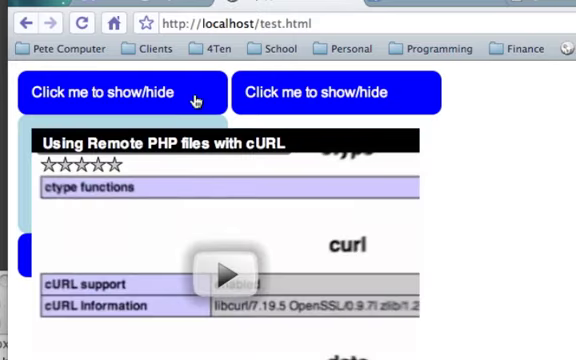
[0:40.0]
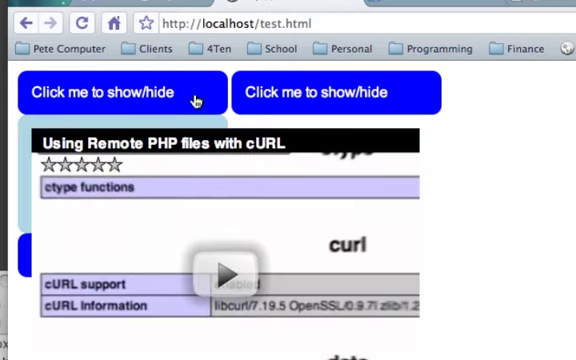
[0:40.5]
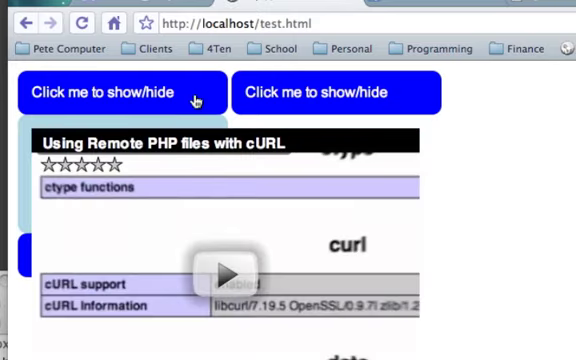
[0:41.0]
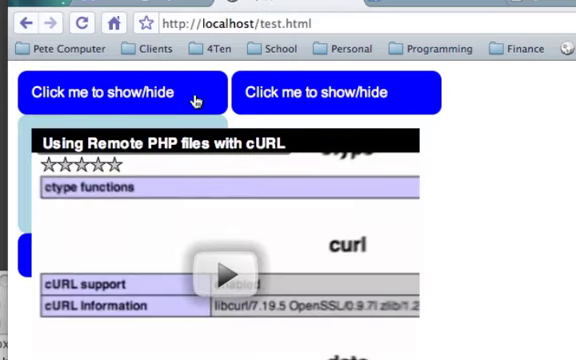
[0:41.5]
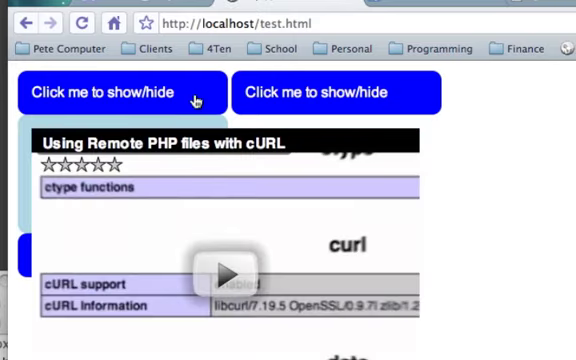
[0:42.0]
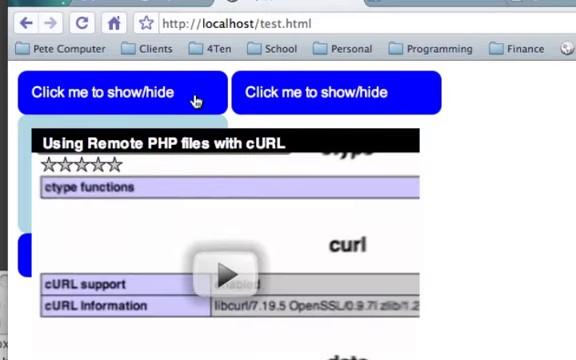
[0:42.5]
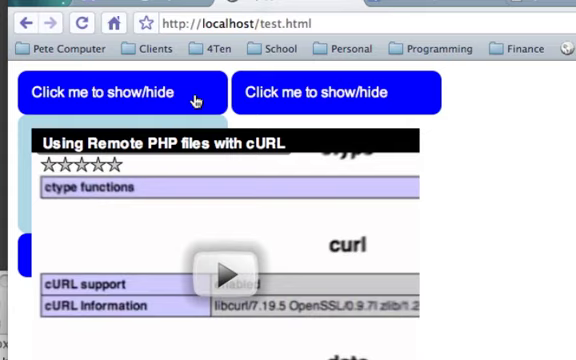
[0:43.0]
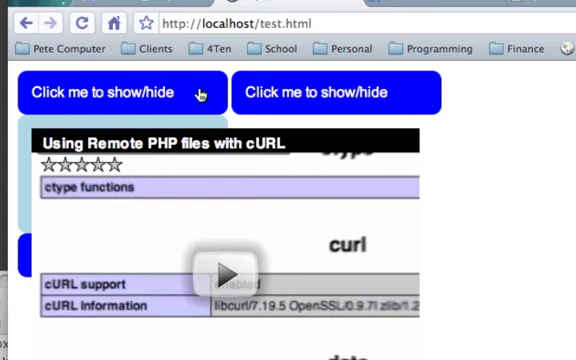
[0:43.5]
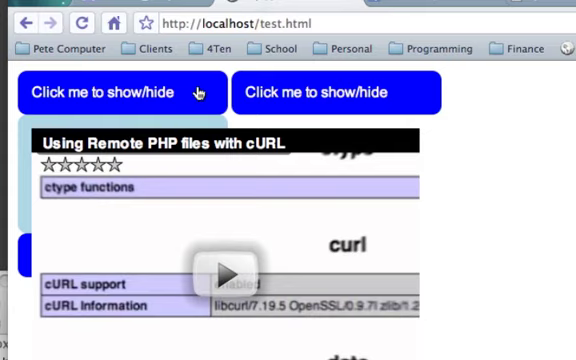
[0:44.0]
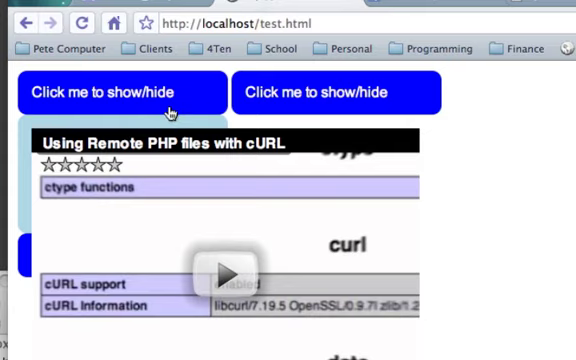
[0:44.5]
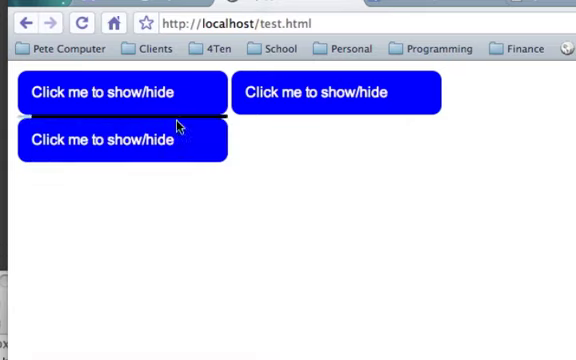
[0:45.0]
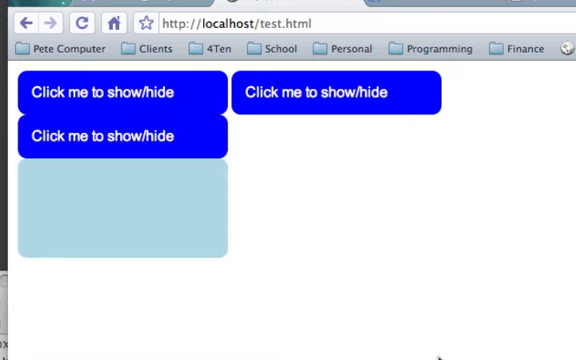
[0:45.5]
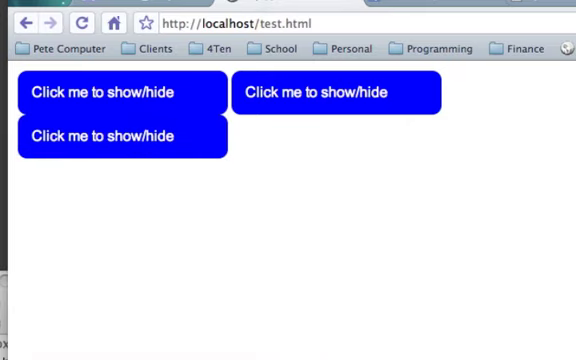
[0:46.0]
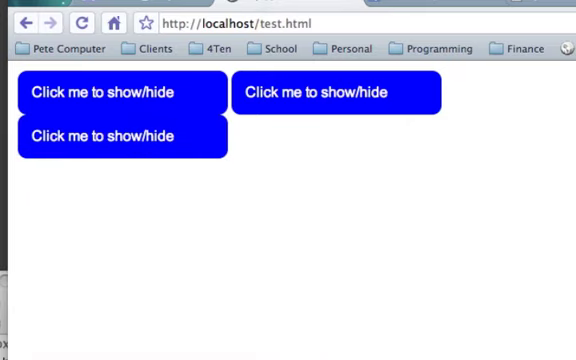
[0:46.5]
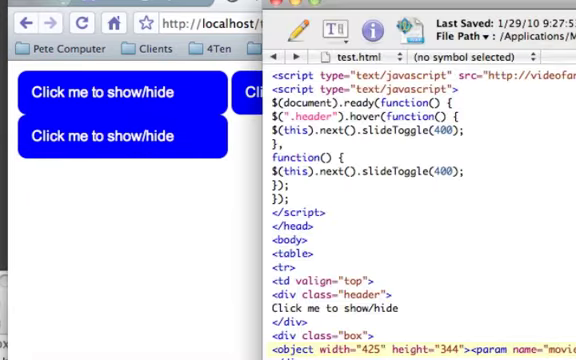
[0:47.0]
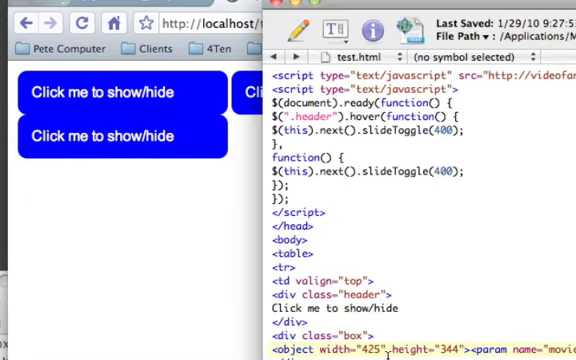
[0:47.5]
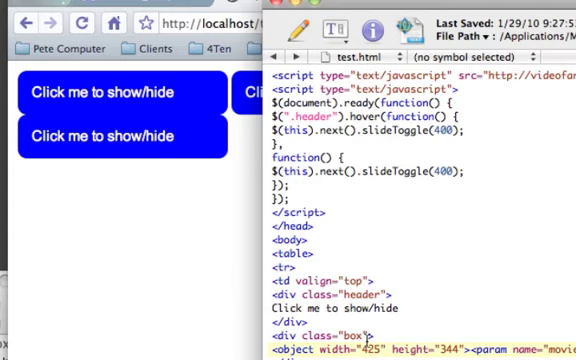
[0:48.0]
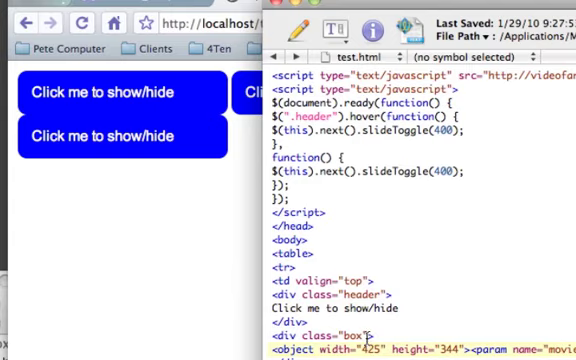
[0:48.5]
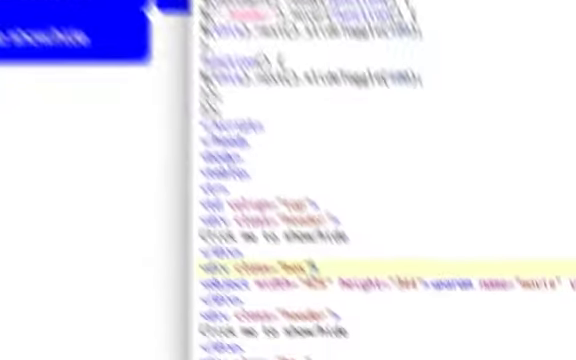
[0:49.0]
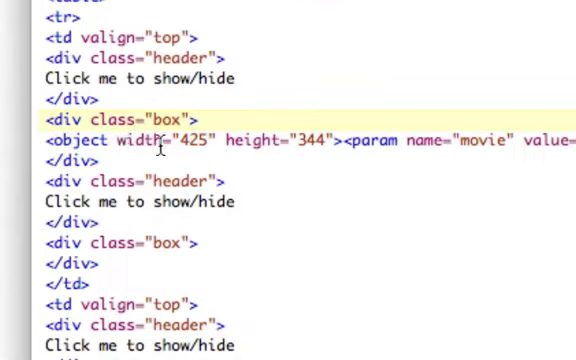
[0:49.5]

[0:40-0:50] Someone is recording their computer screen, with the view zoomed in on a test screen in the web browser on the "localhost/test.html" page. Three identical blue buttons reading "click me to show hide" are shown. The top left one is clicked on and expanded, showing an embedded YouTube video associated with that button. They click on it, which hides the YouTube video. They then open a program showing various lines of text, scroll down, and highlight the width on the line of text associated with embedding the YouTube video.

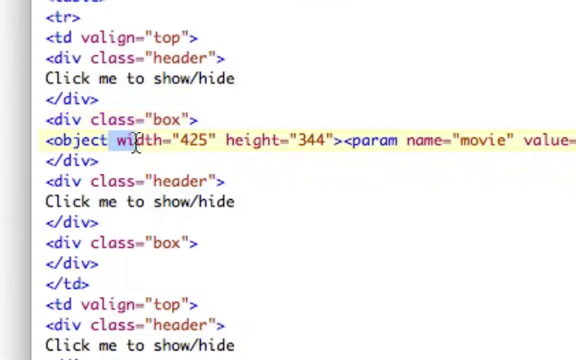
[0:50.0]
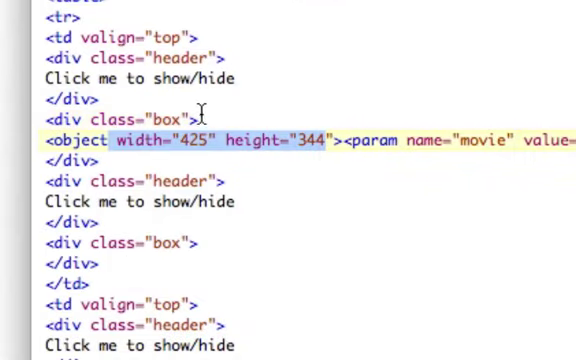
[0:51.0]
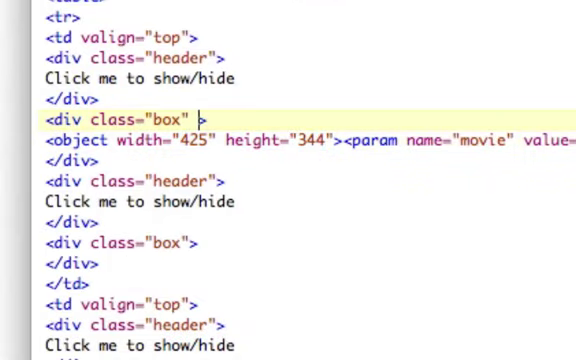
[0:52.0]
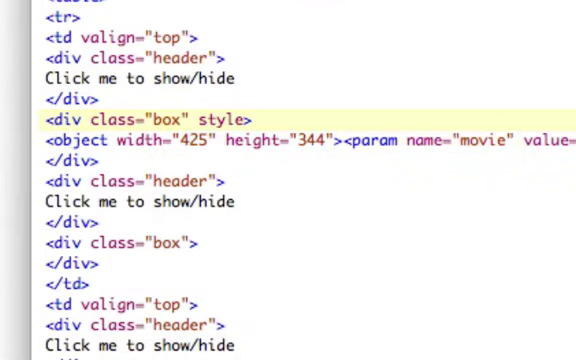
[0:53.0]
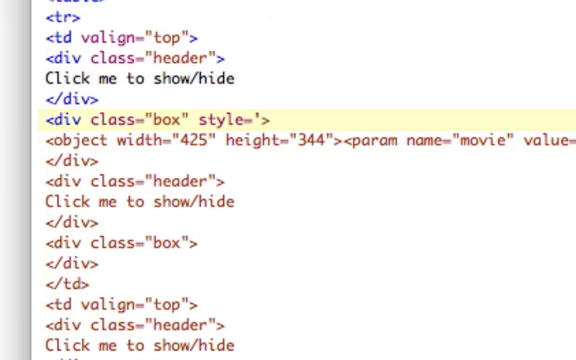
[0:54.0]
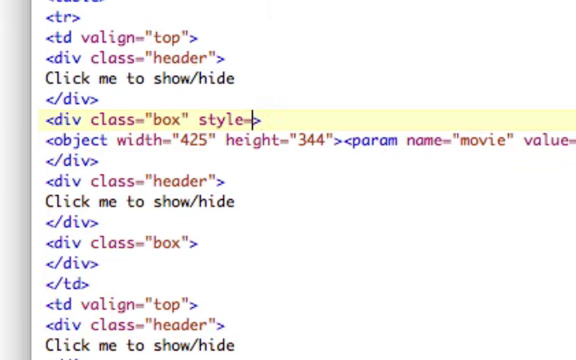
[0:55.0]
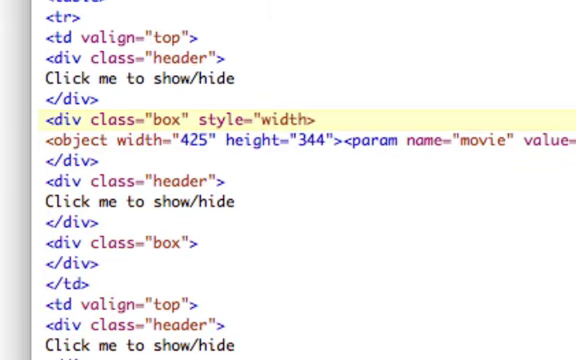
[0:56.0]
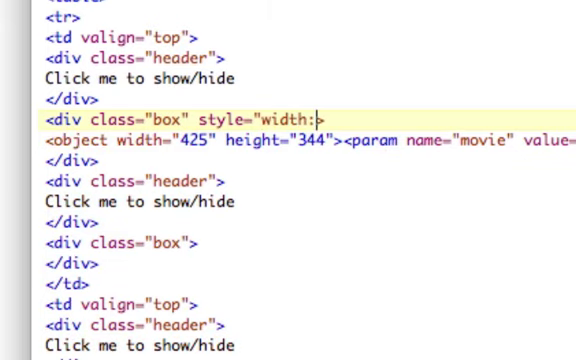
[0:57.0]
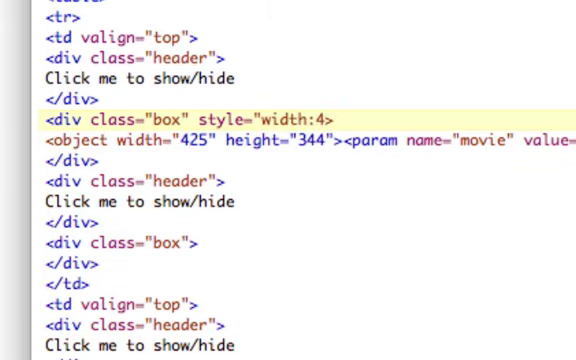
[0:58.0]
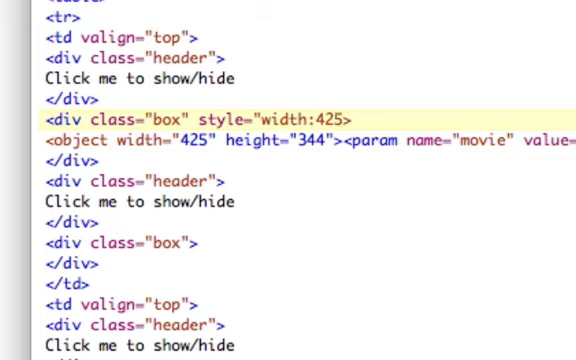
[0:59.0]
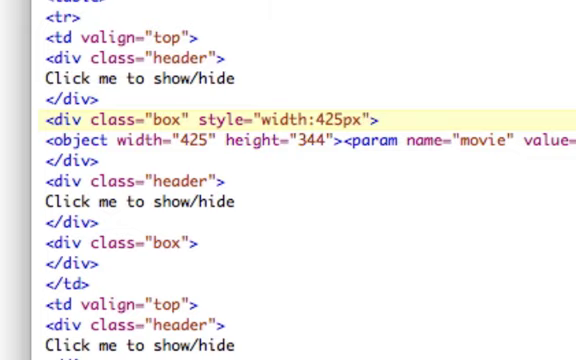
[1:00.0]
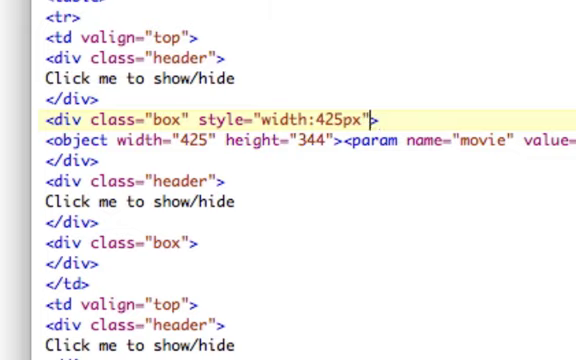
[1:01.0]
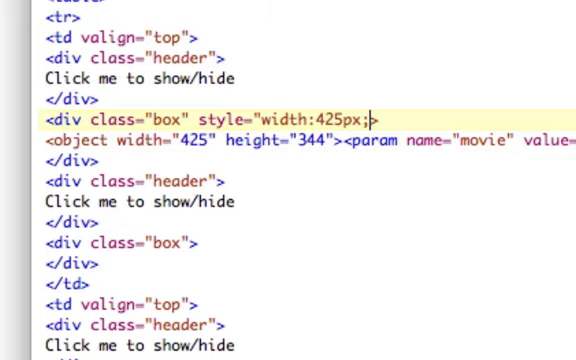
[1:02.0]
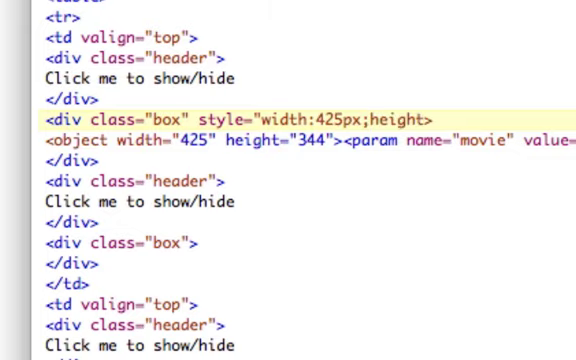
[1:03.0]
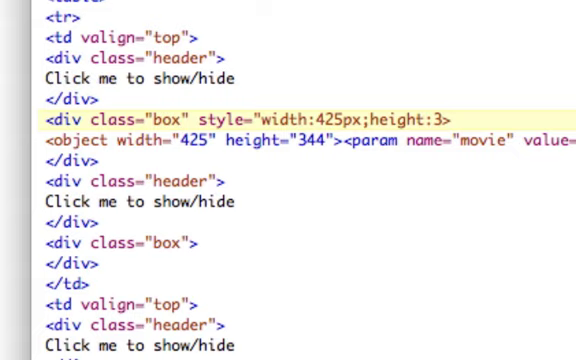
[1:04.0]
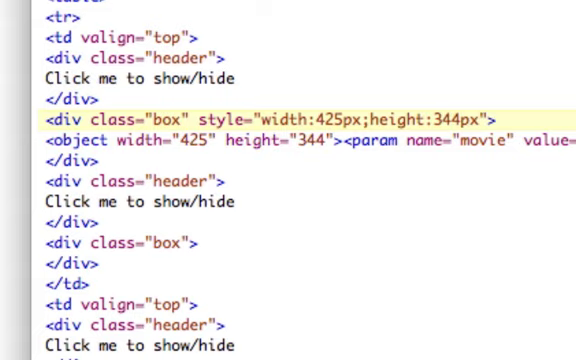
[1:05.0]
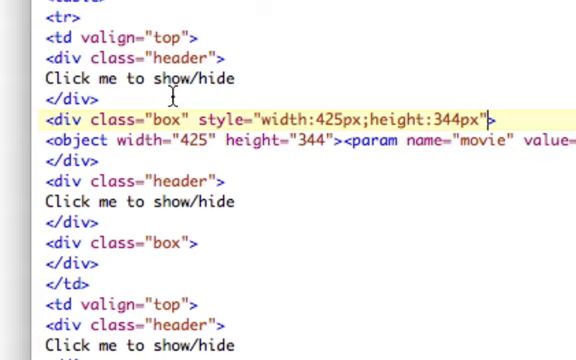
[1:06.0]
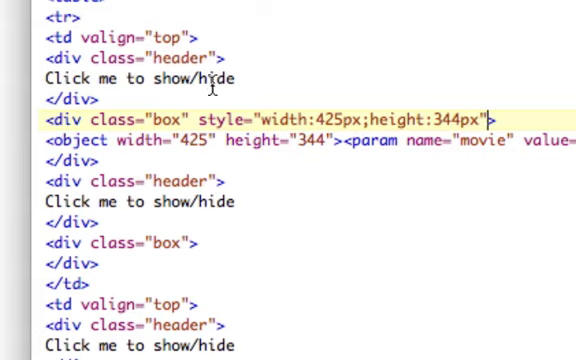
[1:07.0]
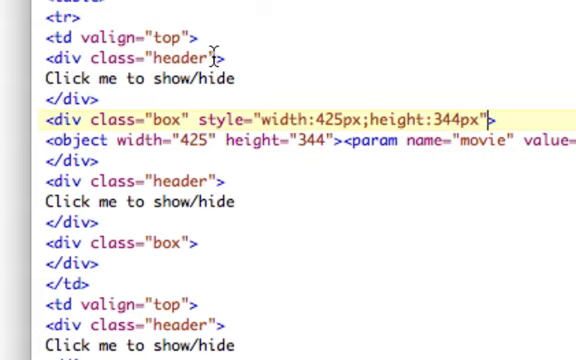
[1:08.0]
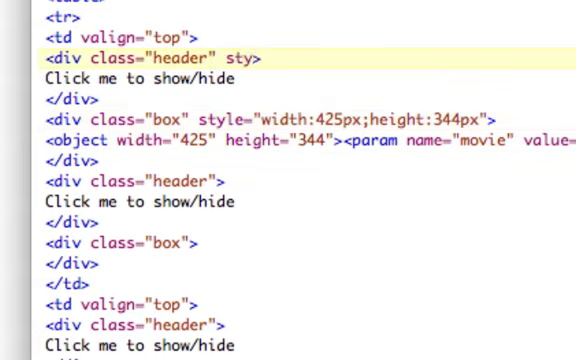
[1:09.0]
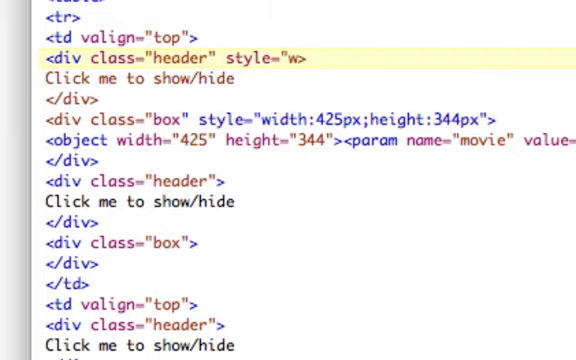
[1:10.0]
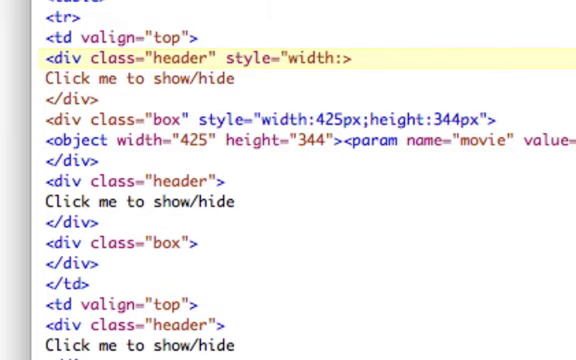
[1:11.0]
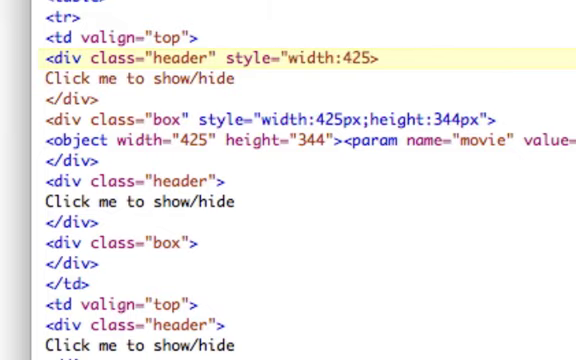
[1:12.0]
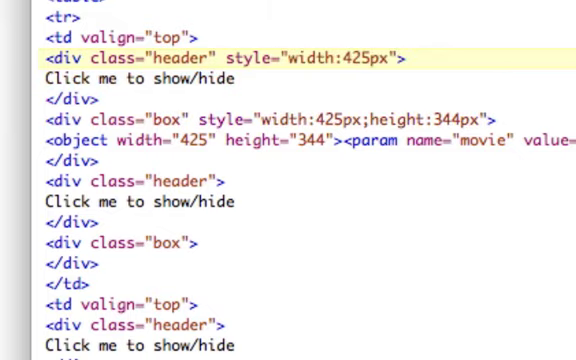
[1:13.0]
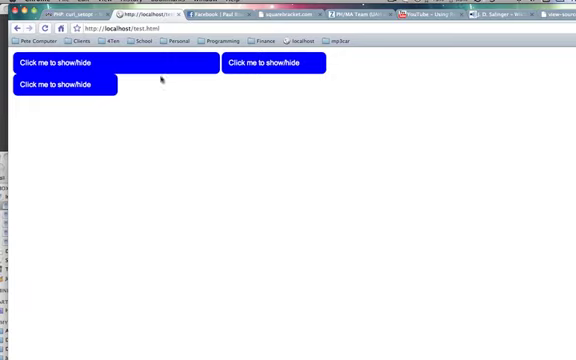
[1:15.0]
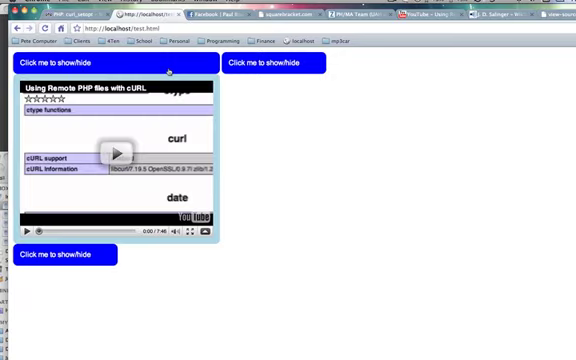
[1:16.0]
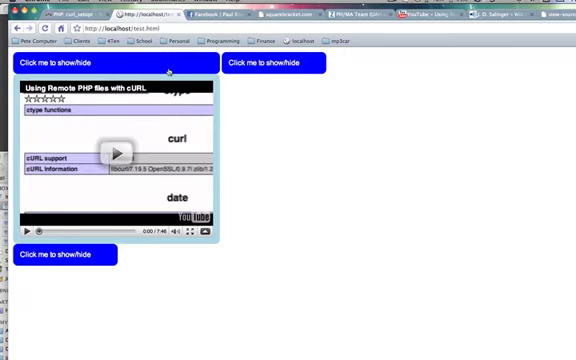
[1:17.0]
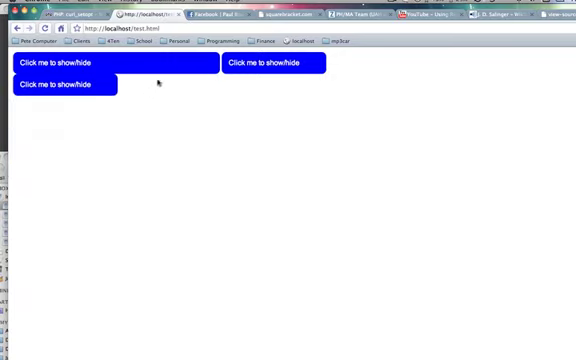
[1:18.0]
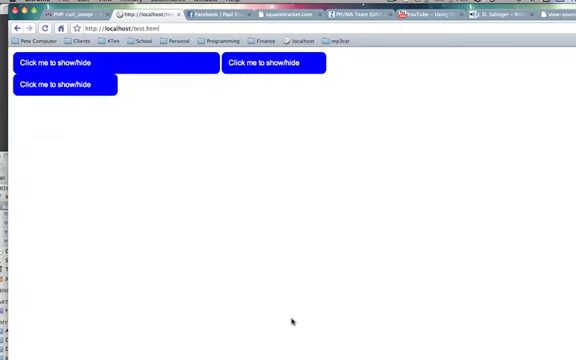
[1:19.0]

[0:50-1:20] Someone is recording their computer screen, with a program open containing multiple lines of code relating to a button that reads "click me to show / hide." They are editing a line that embeds a video from YouTube.com, highlighting the width and height entered in the embed. They then edit the box size to match the width and height from the YouTube embed link, changing this on every instance of the button code. They navigate back to the web browser, which has a "localhost/test.html" page open showing the three identical blue buttons with white text reading "click me to show / hide"; only one of them has something tied to it. They click on the top left one, the only one with anything associated with it, which expands a light blue box with an embedded YouTube video in its center.